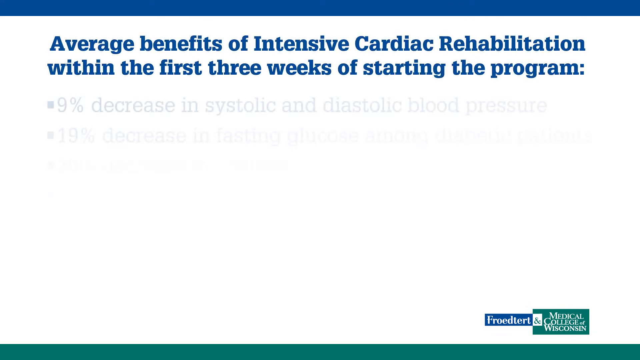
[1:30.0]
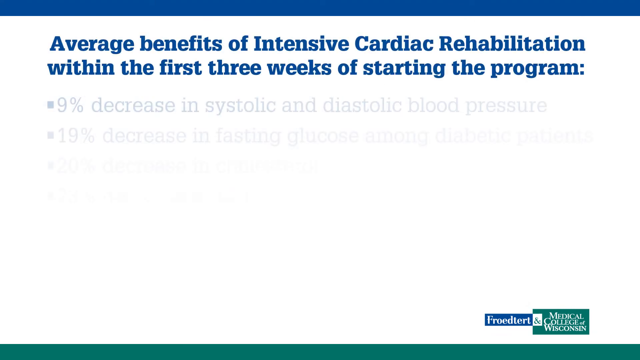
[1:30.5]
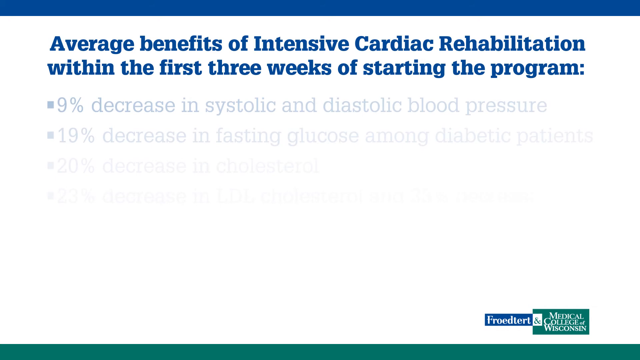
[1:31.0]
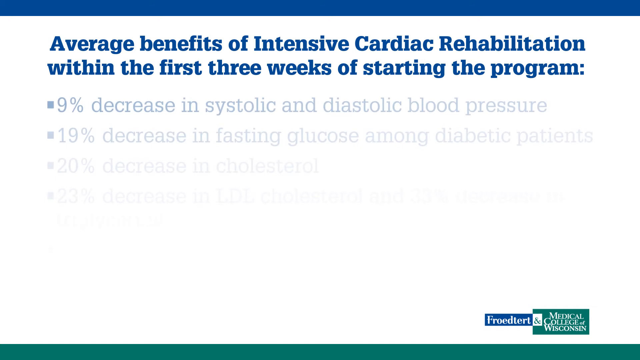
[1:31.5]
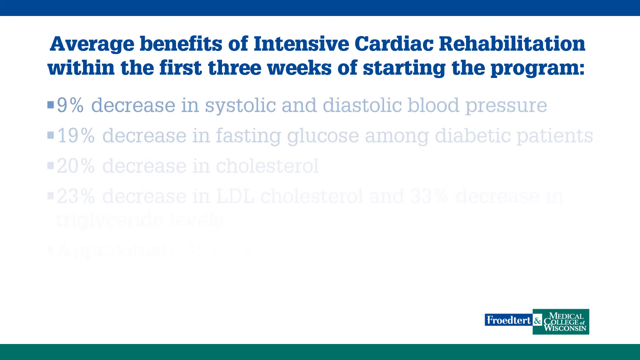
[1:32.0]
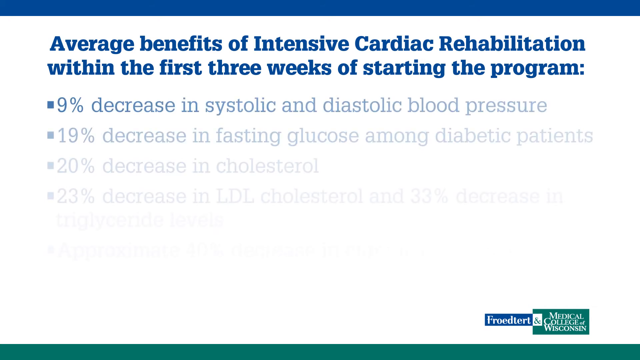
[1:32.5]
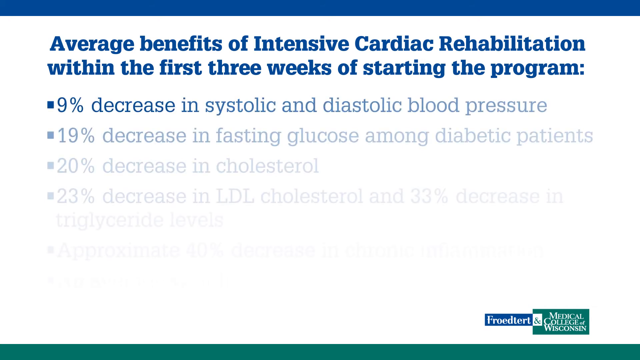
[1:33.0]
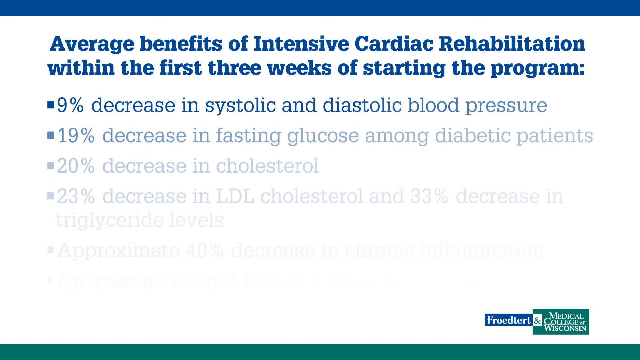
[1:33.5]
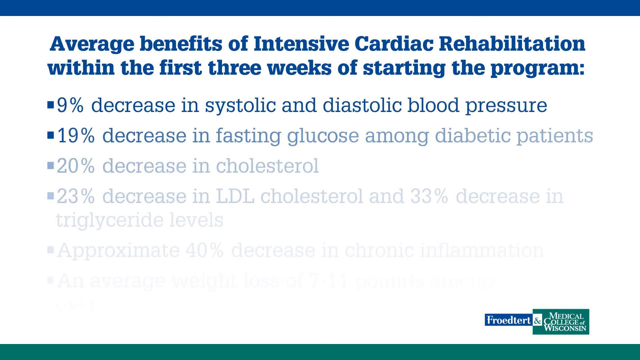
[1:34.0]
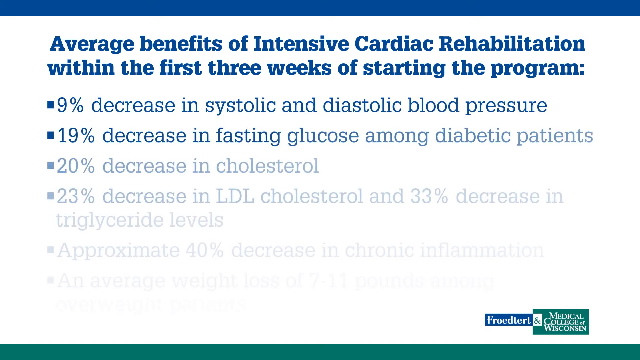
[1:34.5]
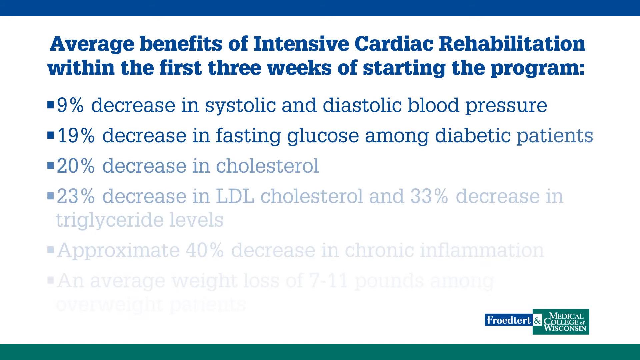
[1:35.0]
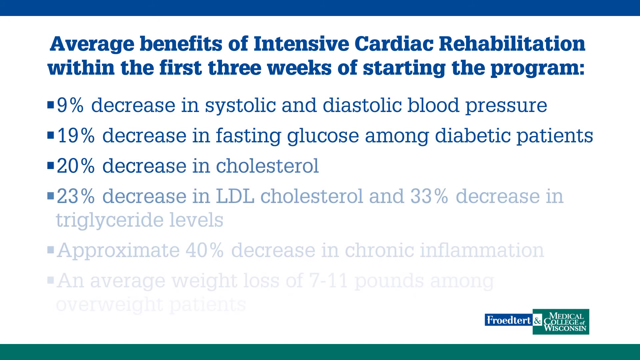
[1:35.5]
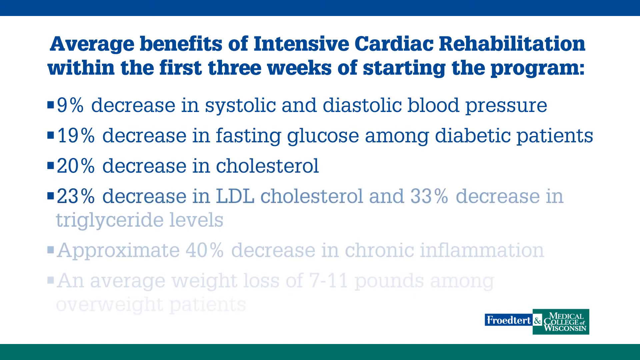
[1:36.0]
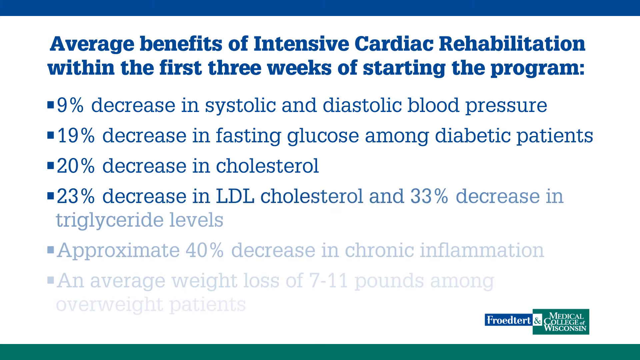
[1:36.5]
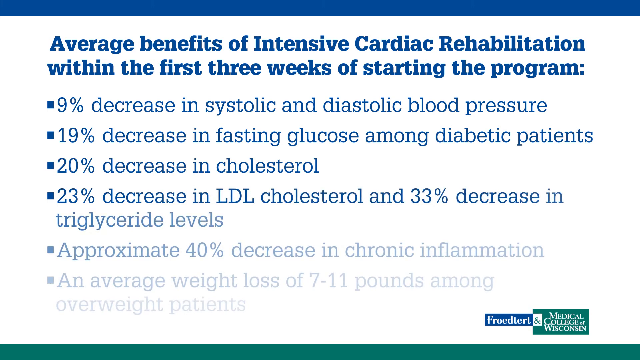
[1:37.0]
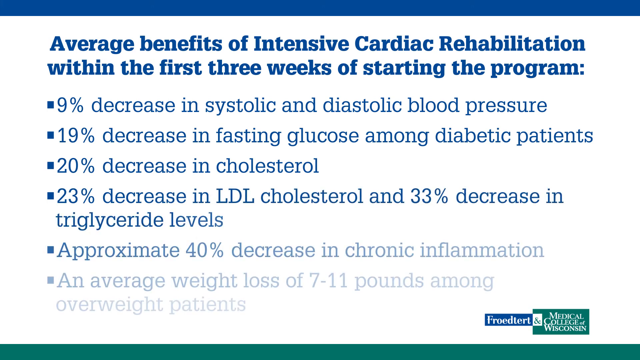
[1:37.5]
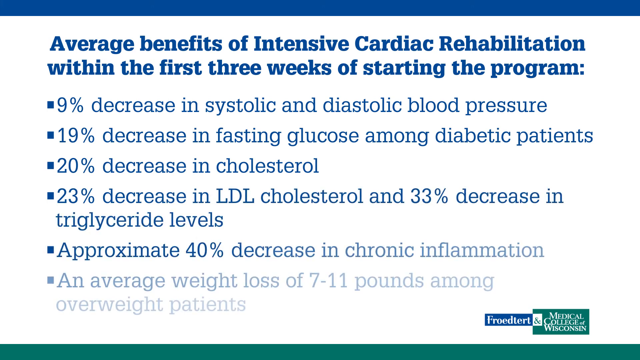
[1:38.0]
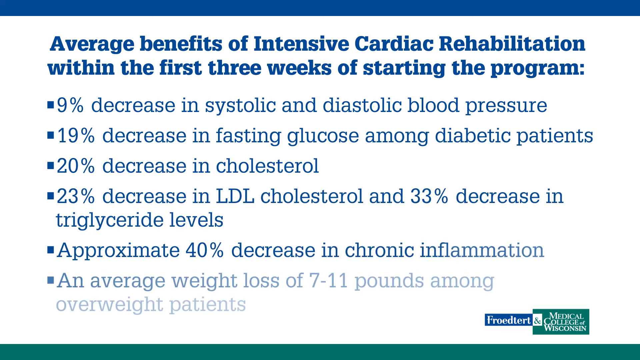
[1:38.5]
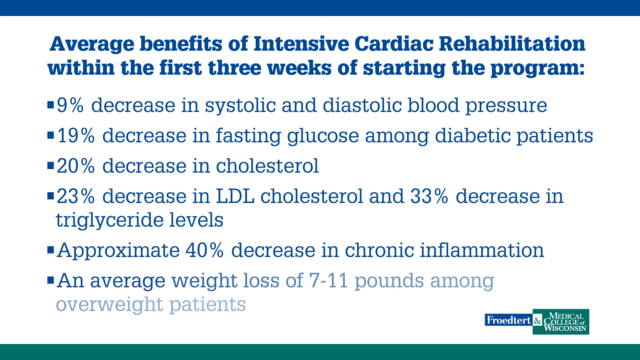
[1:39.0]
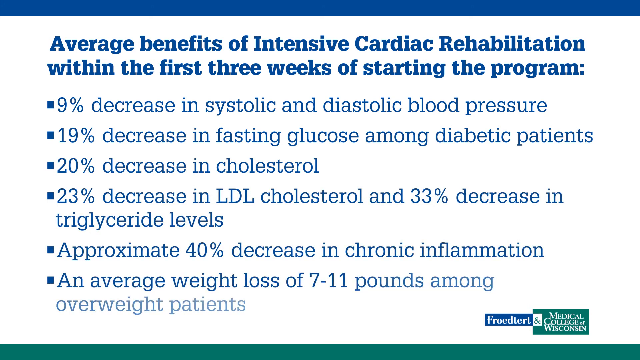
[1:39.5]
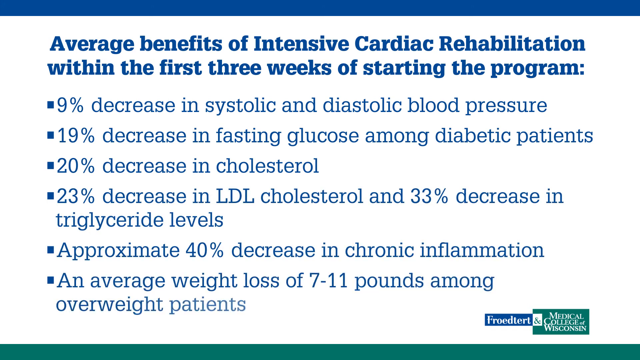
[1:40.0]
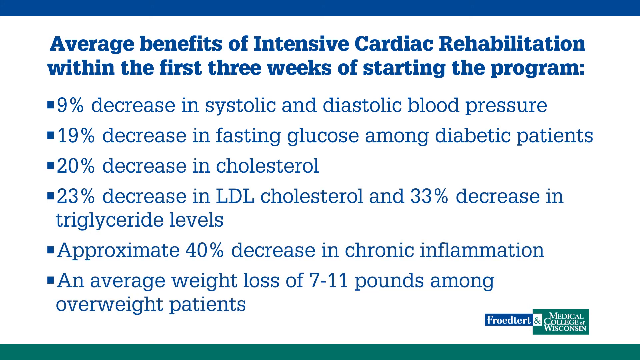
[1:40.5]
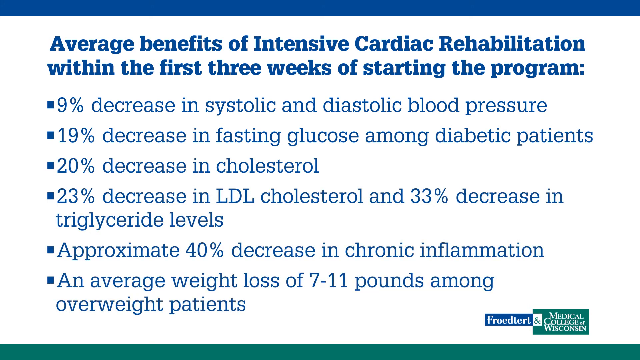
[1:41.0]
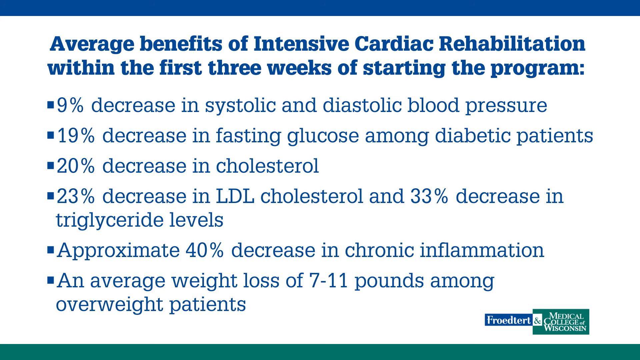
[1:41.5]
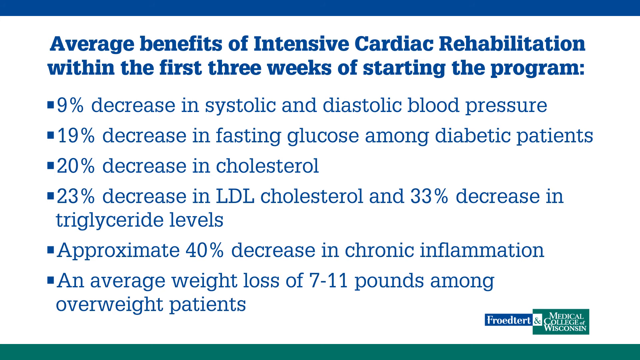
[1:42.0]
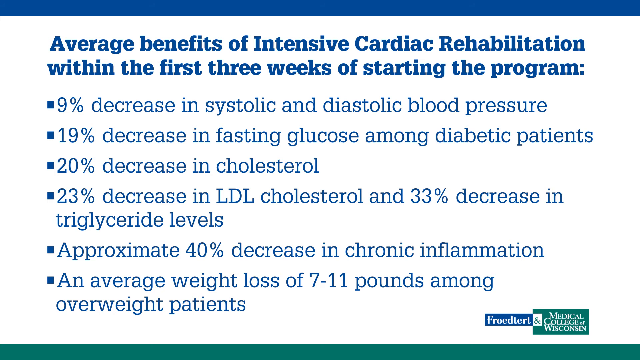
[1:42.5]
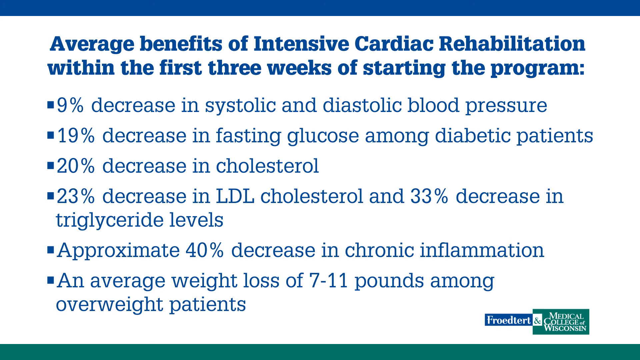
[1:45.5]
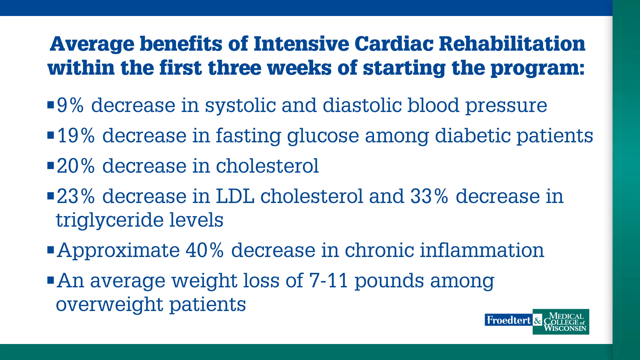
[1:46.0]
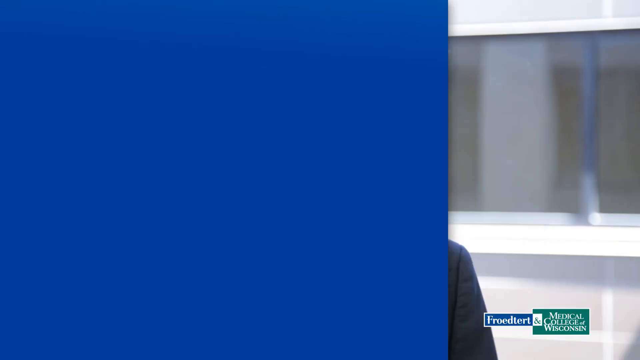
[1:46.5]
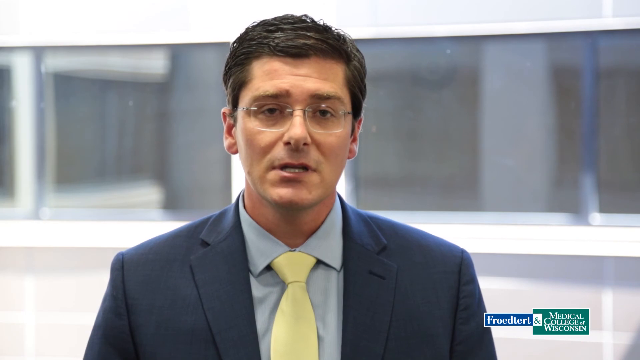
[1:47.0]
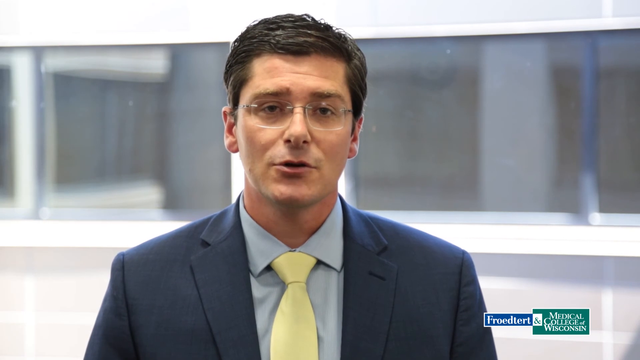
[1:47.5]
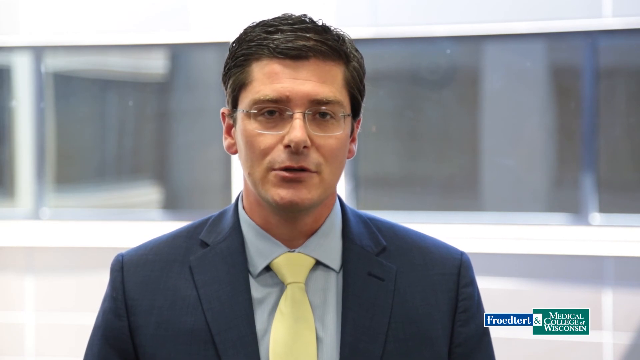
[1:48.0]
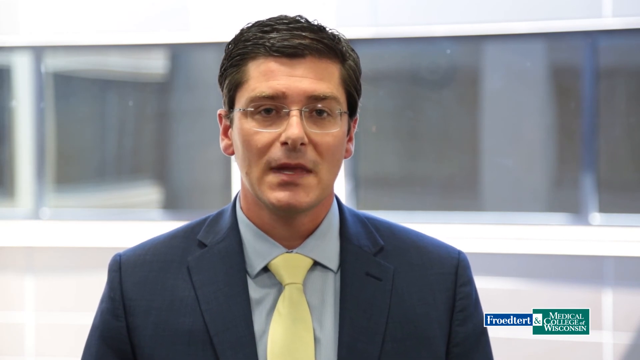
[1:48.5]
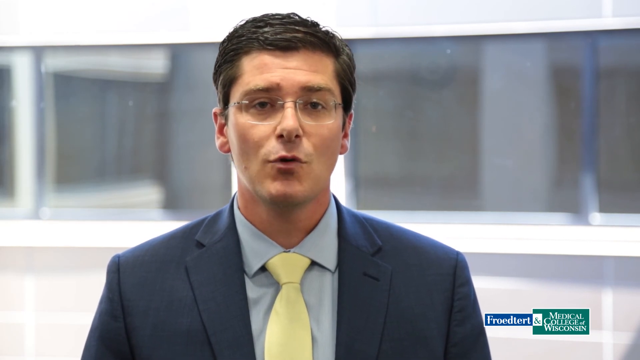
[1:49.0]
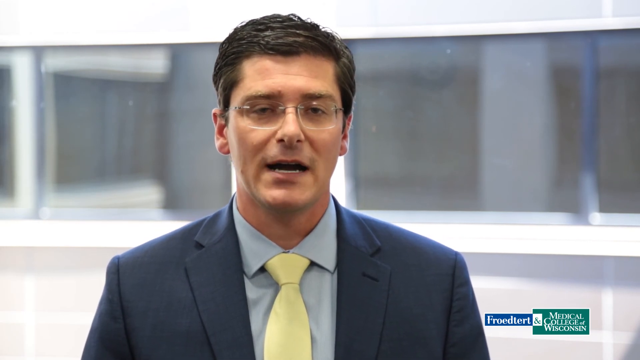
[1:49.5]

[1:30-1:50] A PowerPoint presentation slide, apparently from the Medical School of Wisconsin, has a solid white background with bold dark blue text reading "average benefits of intensive cardiac rehabilitation within the first three weeks of starting the program." The slide lists a 9% decrease in blood pressure, up to a 19% decrease in fasting glucose among diabetic patients, a 20% decrease in cholesterol, a 23% decrease in LDL cholesterol, a 33% decrease in triglyceride levels, an approximately 40% decrease in chronic inflammation, and an average weight loss of 7 to 11 pounds among overweight patients.